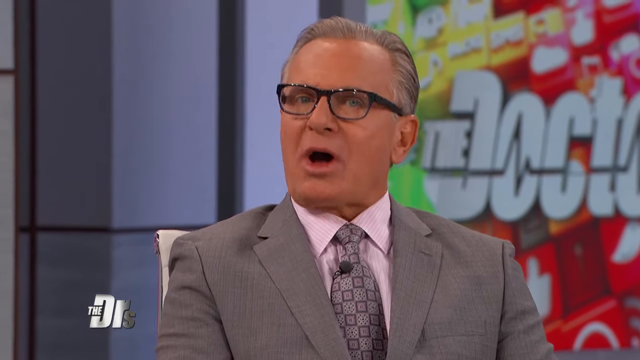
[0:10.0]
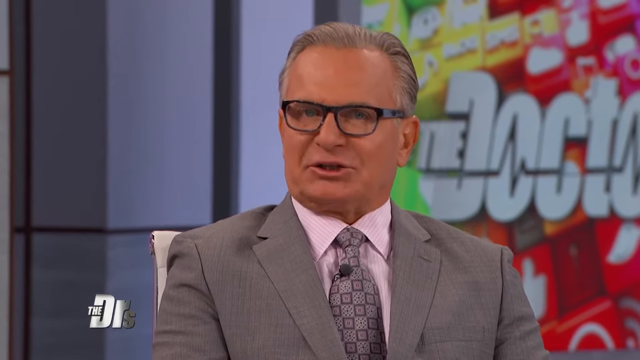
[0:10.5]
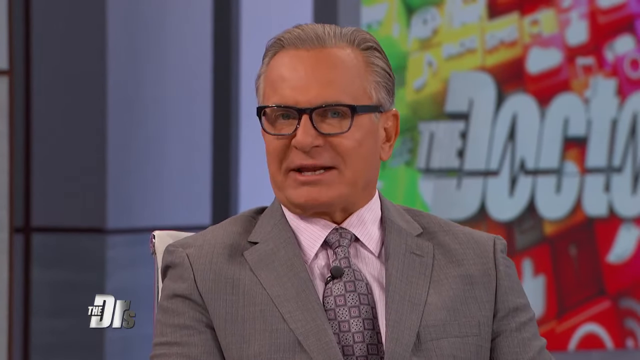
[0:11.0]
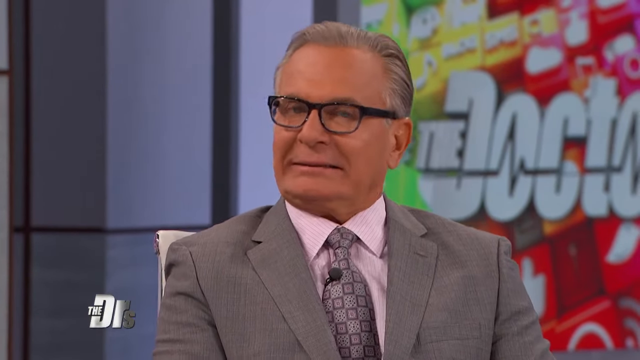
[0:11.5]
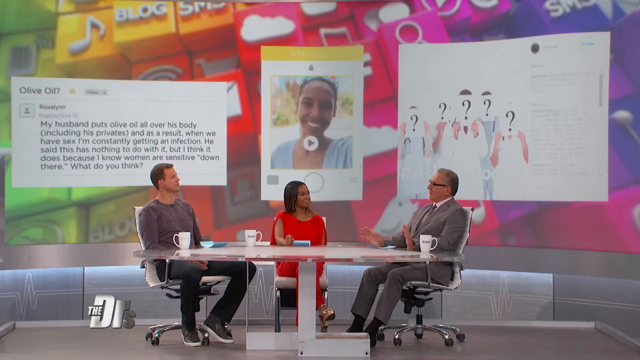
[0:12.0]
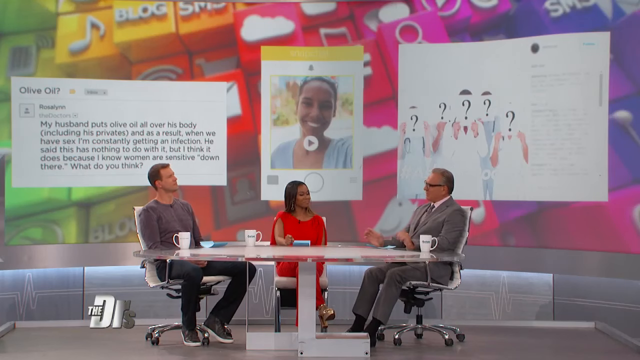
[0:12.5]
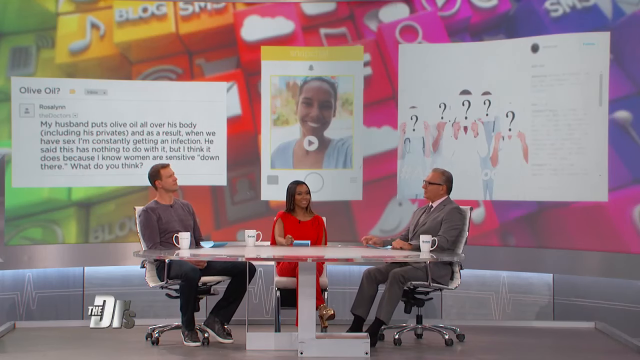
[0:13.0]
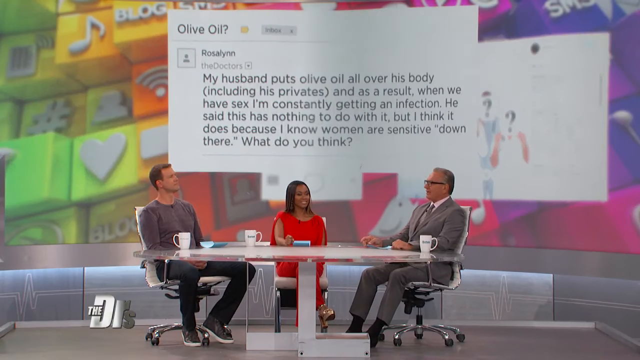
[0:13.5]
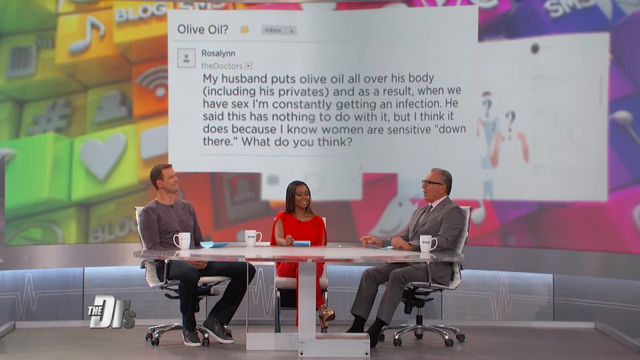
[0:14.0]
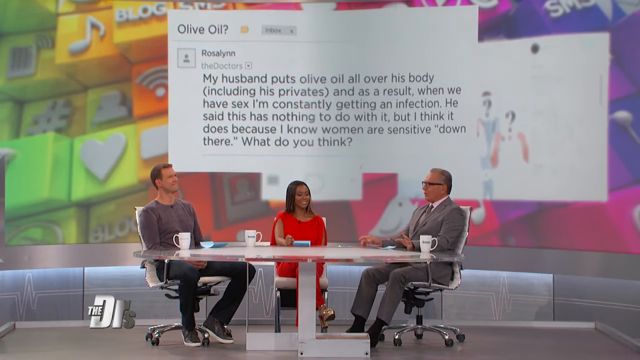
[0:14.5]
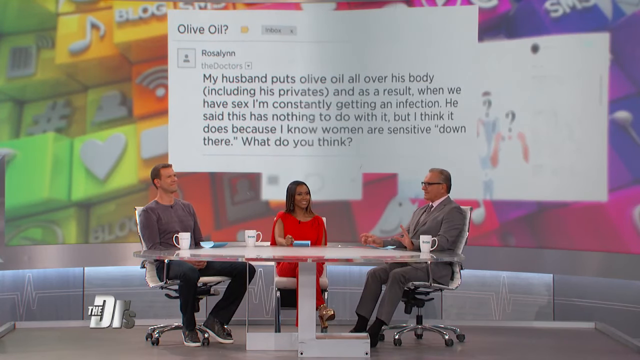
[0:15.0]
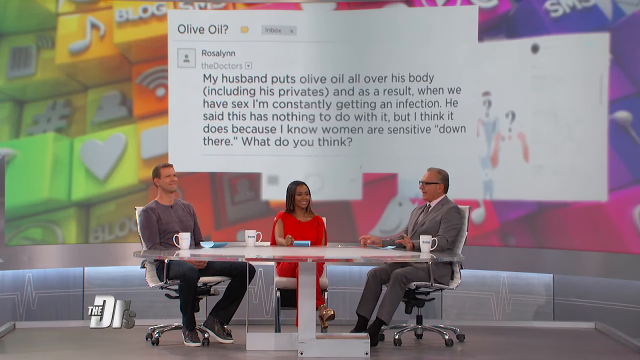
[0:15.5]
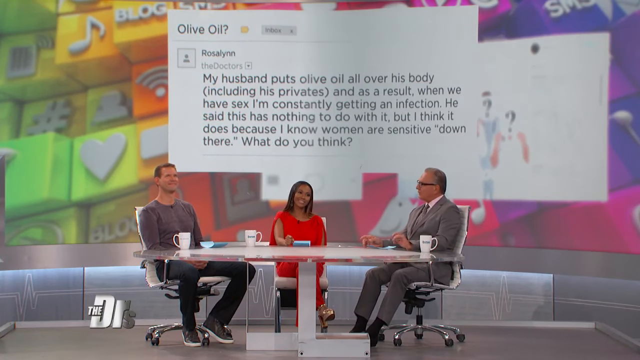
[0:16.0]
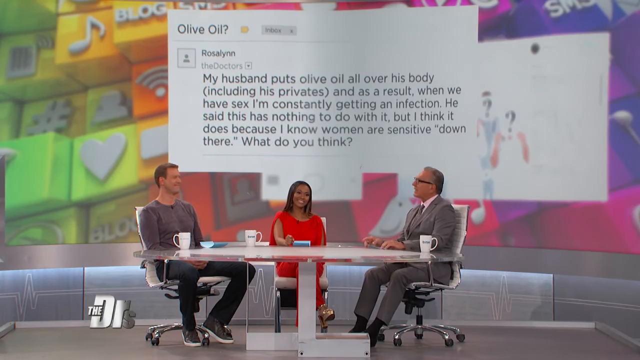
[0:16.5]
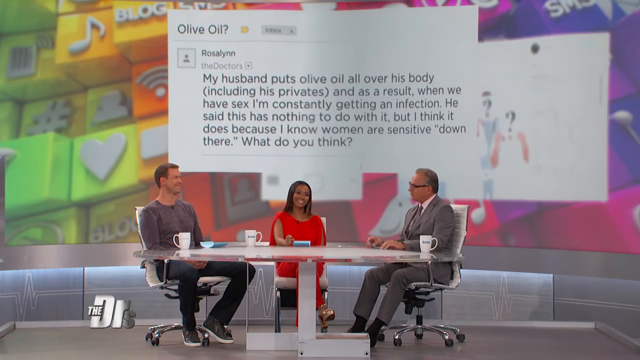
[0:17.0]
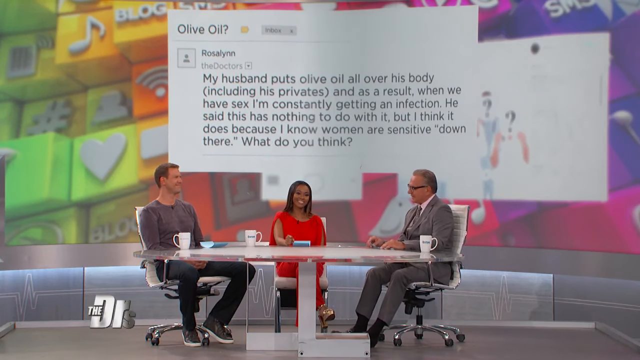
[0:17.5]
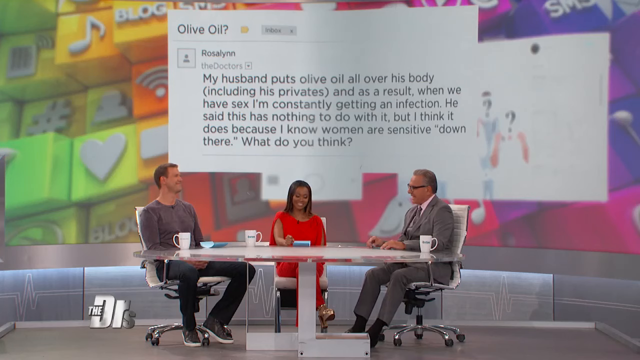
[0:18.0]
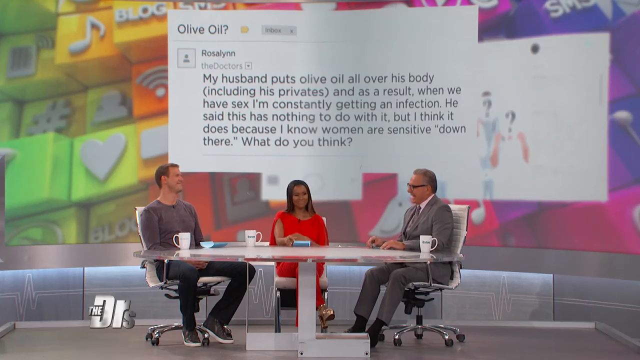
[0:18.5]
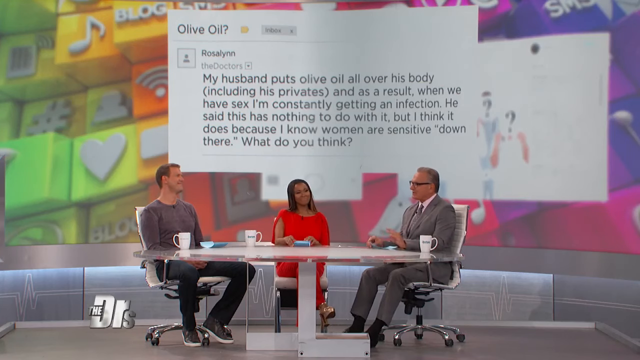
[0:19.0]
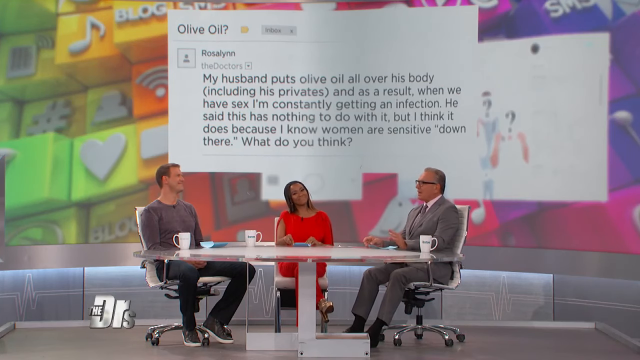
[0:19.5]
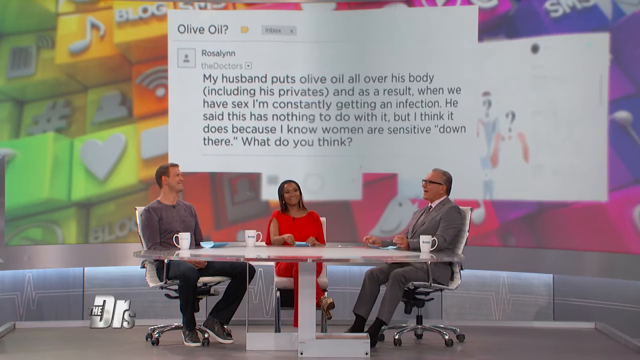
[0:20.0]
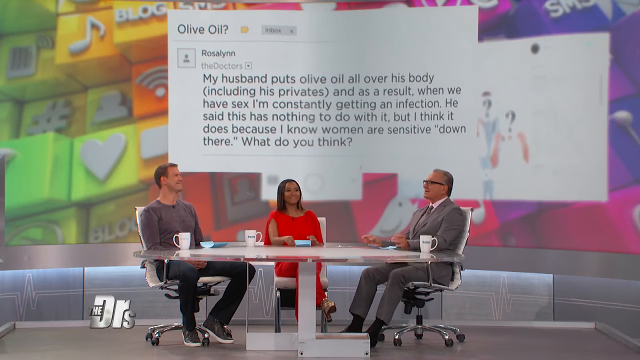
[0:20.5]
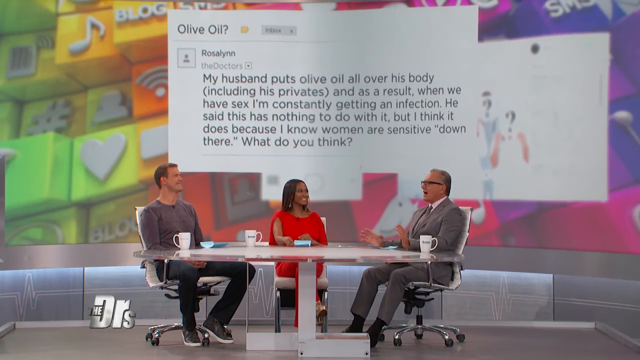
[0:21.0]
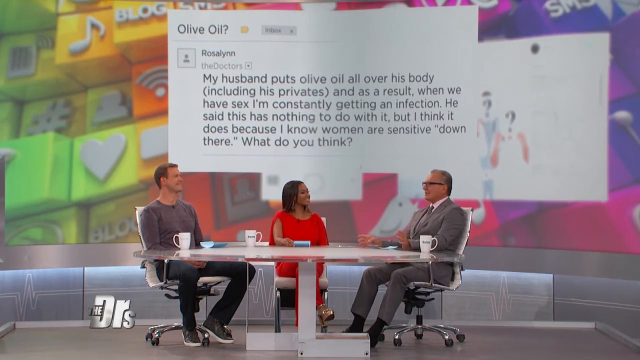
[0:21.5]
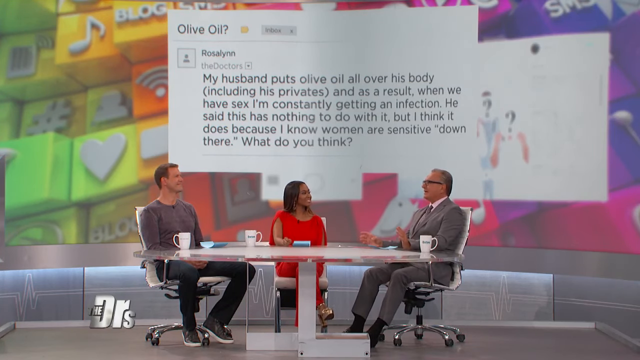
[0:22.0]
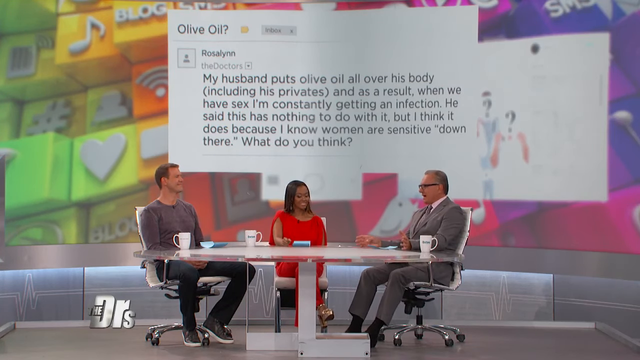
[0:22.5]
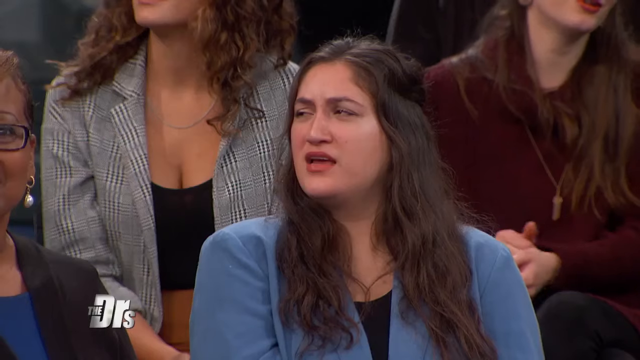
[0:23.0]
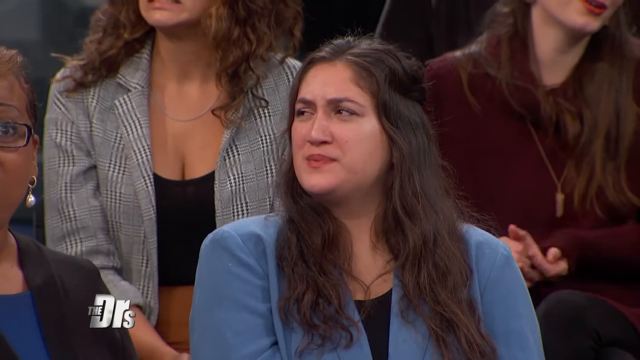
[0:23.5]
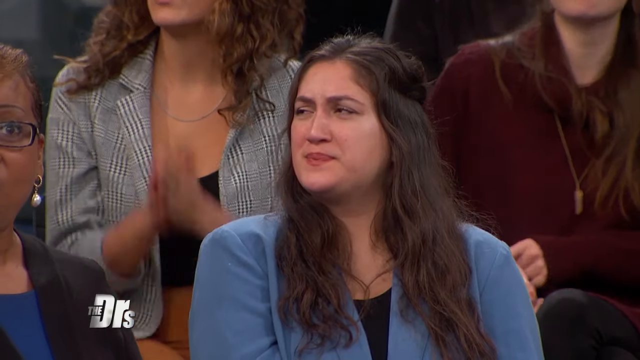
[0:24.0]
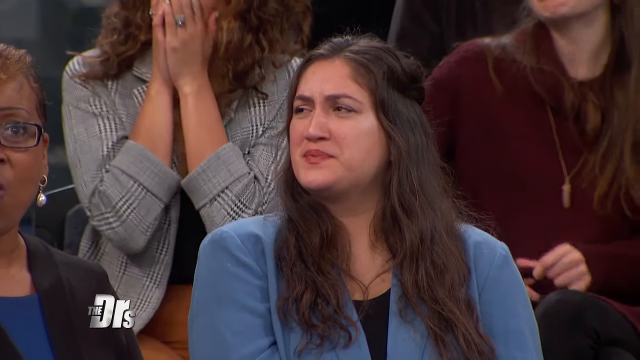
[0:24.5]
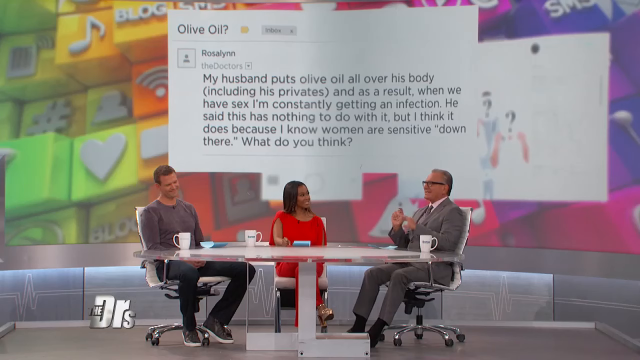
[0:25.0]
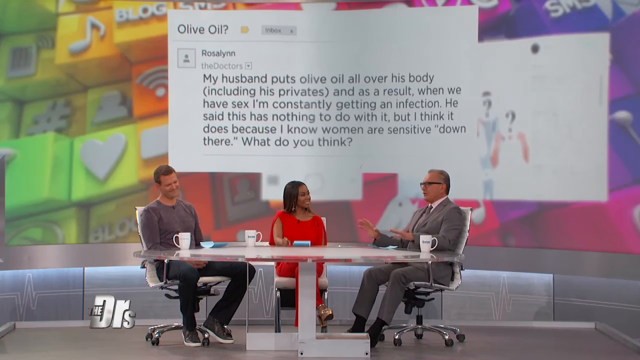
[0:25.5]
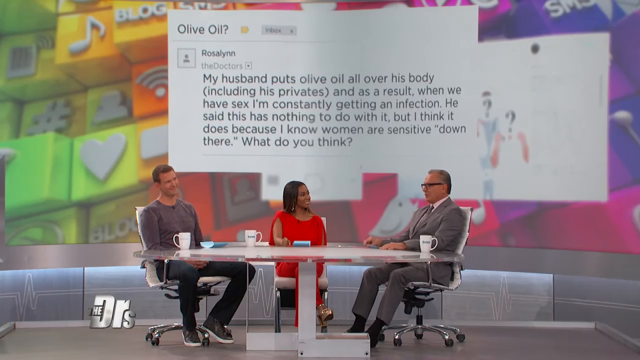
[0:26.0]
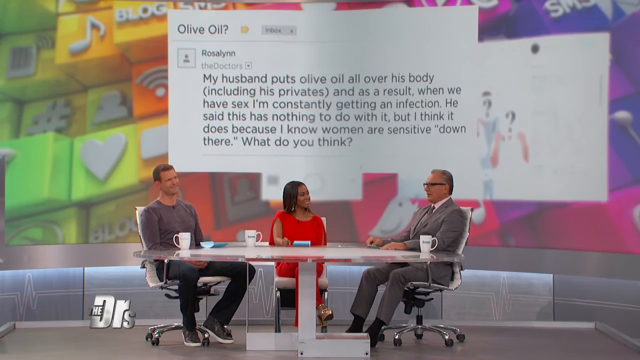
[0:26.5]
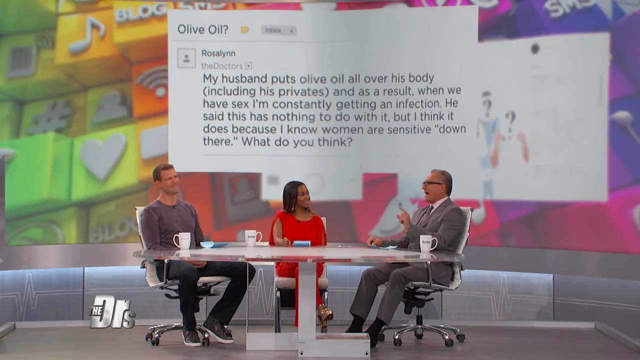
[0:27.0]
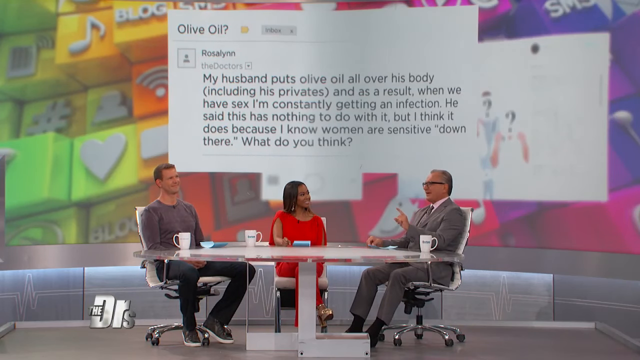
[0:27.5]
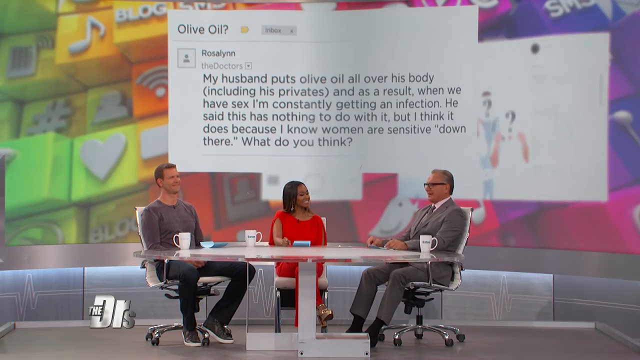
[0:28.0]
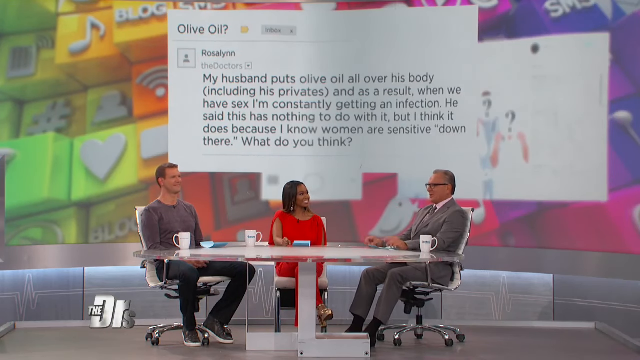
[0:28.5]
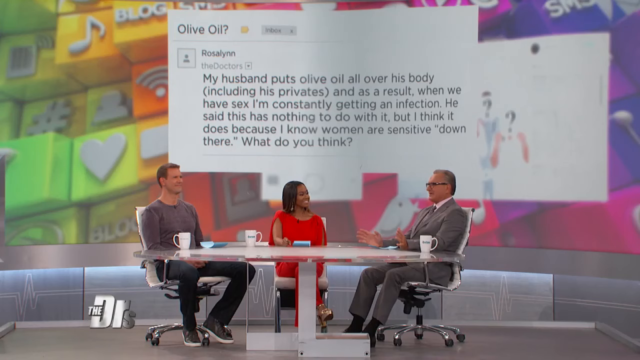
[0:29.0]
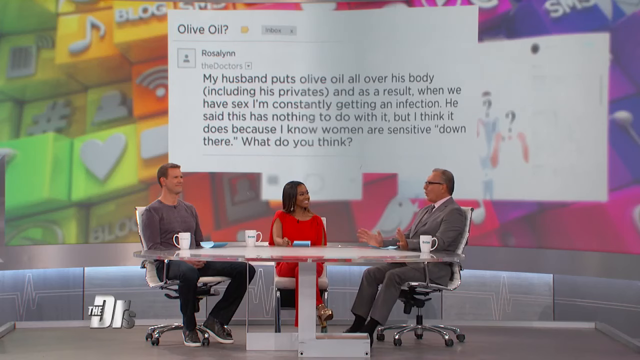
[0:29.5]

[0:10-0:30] The man continues speaking as a title info card comes up reading: "My husband puts olive oil all over his body, including his privates. And as a result, when we have sex, I'm constantly getting an infection. He said, this has nothing to do with it, but I think it does because I know women are sensitive down there. What do you think?" The question is from a person named Rosalyn who wrote in to the doctors. The man in the gray suit is then sitting at a table in a white chair with wheels. A woman with long hair in a red dress sits to his right with her leg crossed, wearing gold shoes. To her right is a person in a gray shirt whose mic is very visible, with blue pants and gray or dark-colored shoes, loafers or casual shoes. The table has a white base, and there are coffee cups on it that all seem to be the same kind. Blue cards or blue devices are on the table in front of each person. They are speaking; the woman laughs, sort of amused, and looks over to the man who is talking. The shot cuts to the audience, where a woman has her lips pursed and her eyes partially closed, and the woman behind her has thrown her hands up to her face and mouth. The shot returns to the hosts at the front, in front of the card.